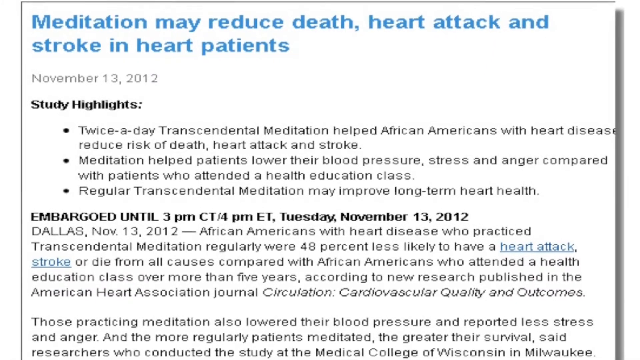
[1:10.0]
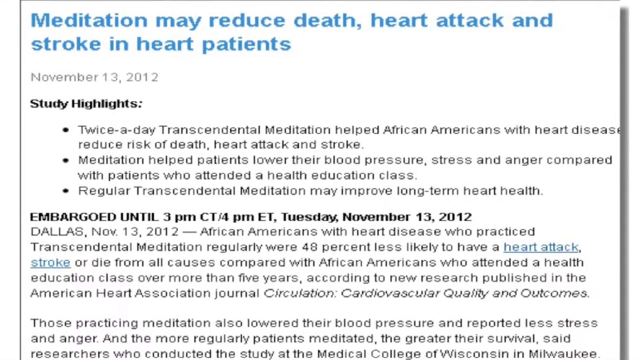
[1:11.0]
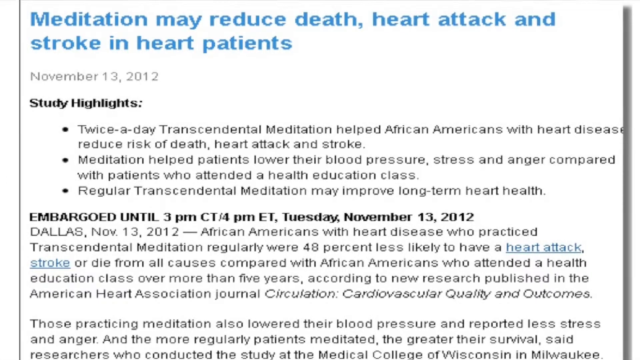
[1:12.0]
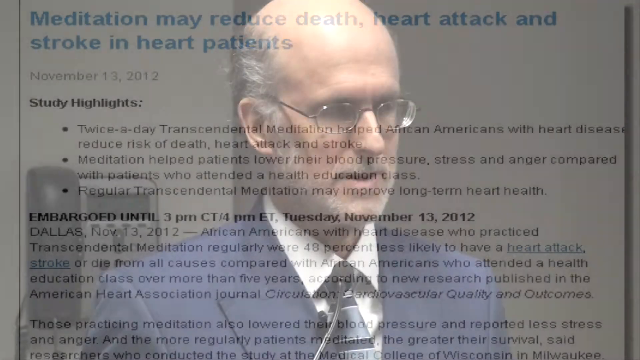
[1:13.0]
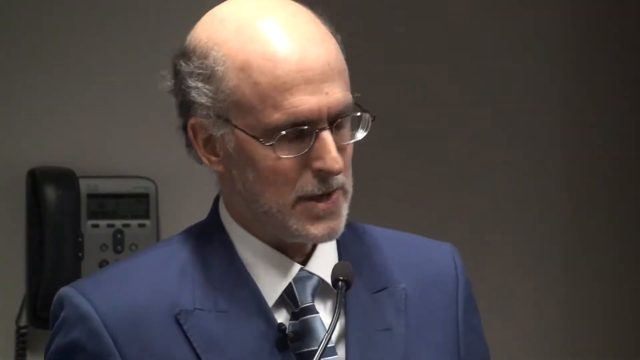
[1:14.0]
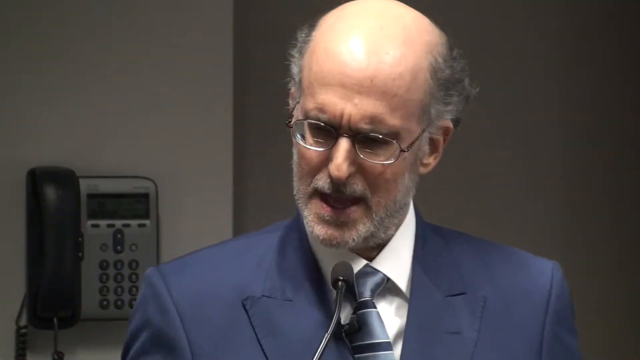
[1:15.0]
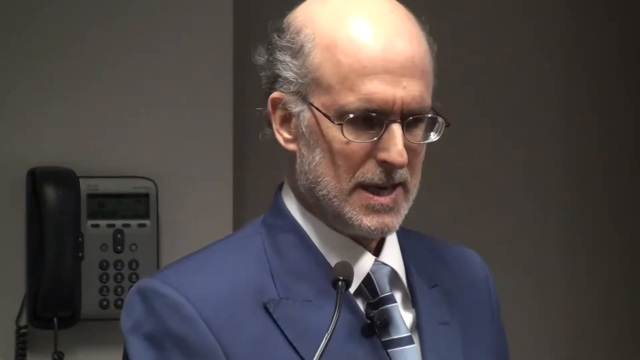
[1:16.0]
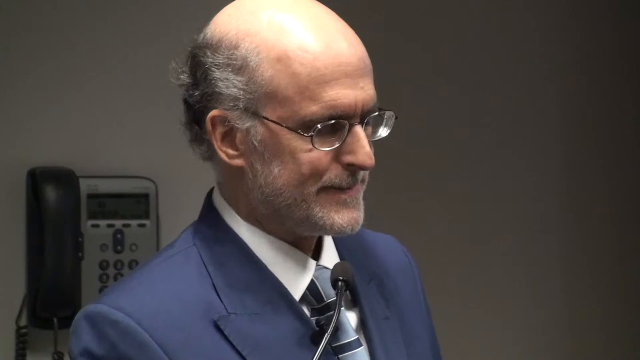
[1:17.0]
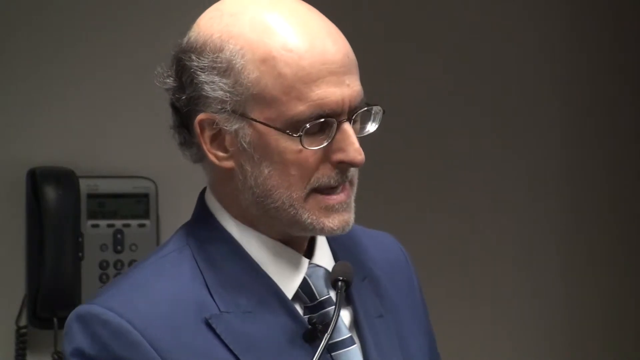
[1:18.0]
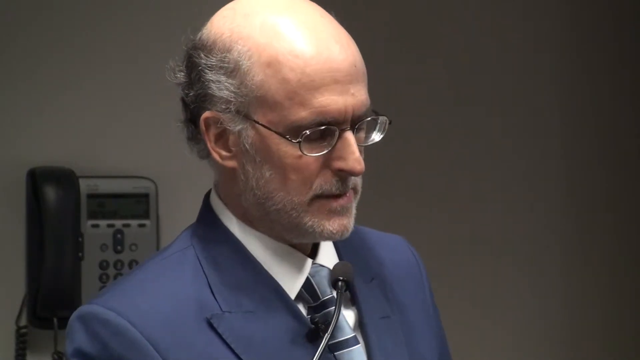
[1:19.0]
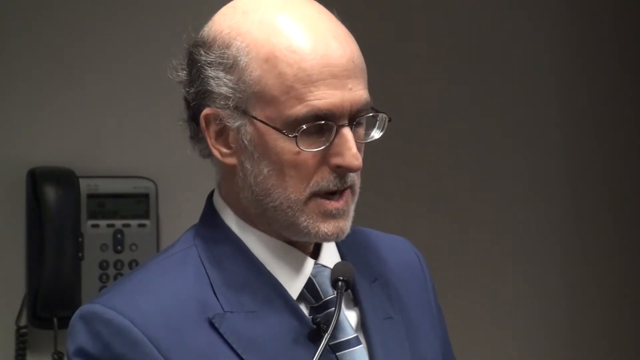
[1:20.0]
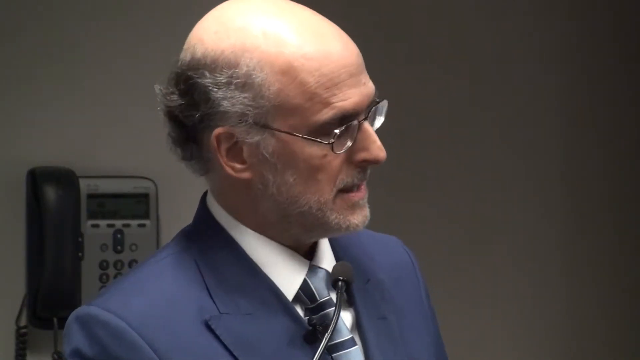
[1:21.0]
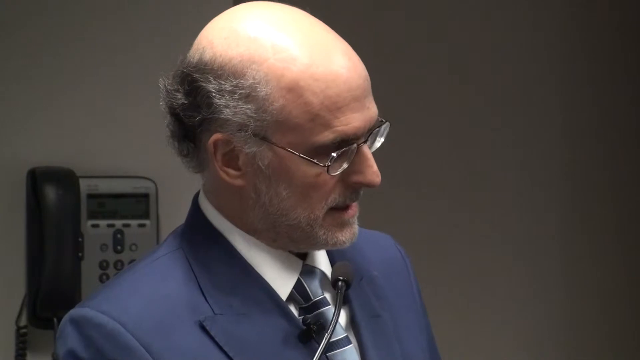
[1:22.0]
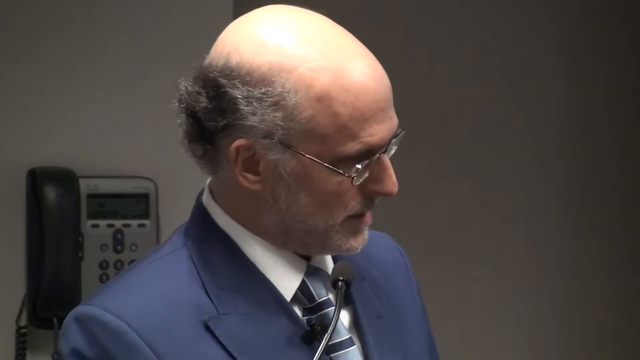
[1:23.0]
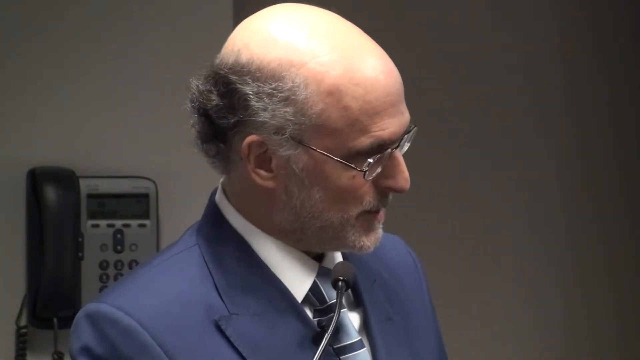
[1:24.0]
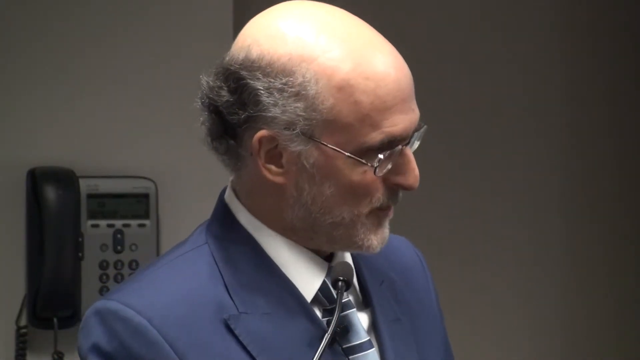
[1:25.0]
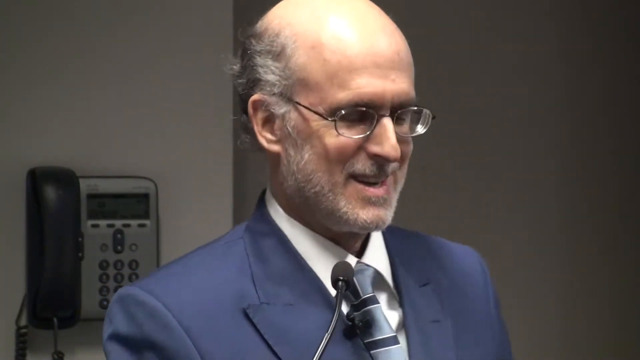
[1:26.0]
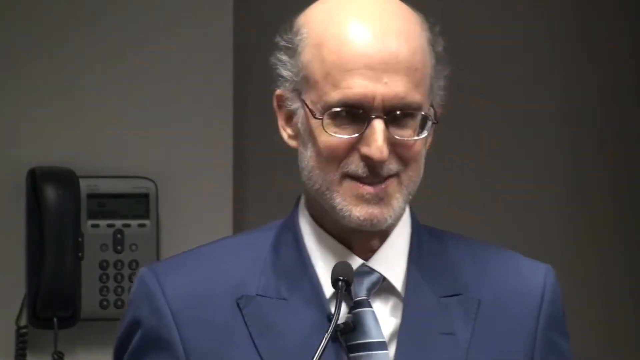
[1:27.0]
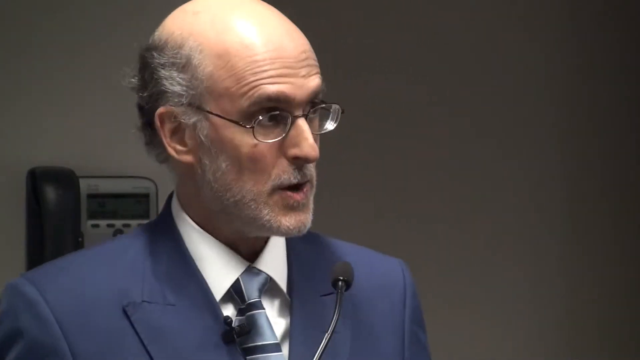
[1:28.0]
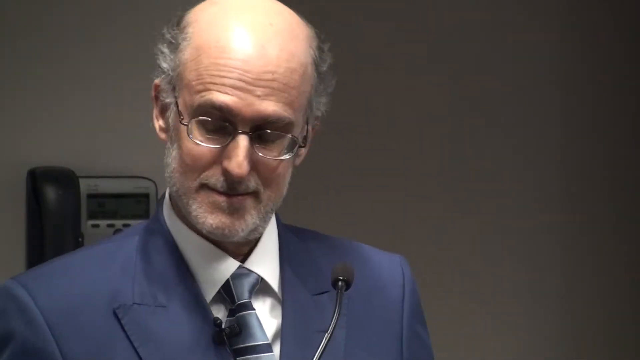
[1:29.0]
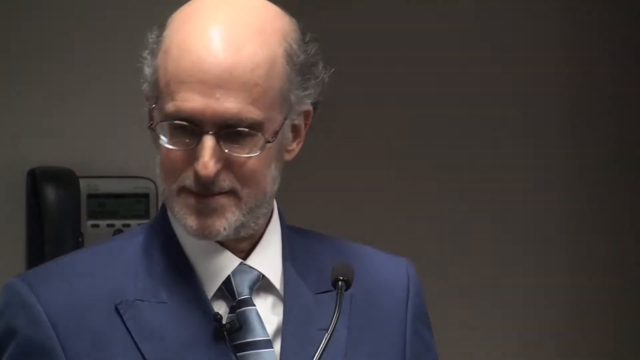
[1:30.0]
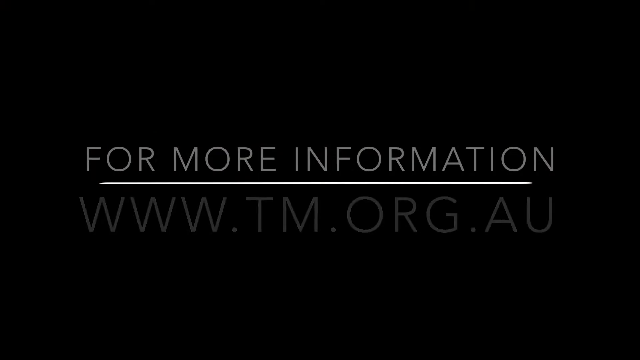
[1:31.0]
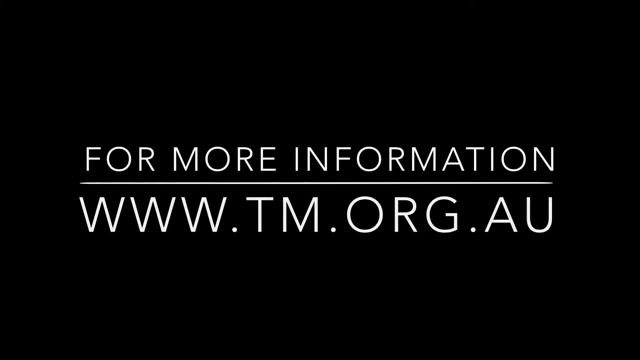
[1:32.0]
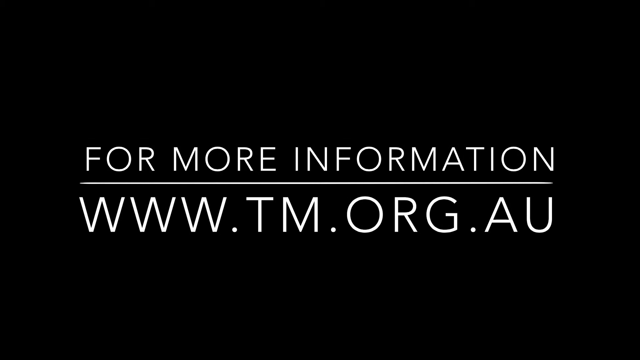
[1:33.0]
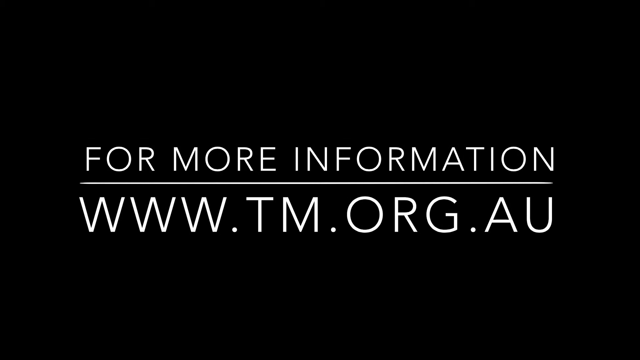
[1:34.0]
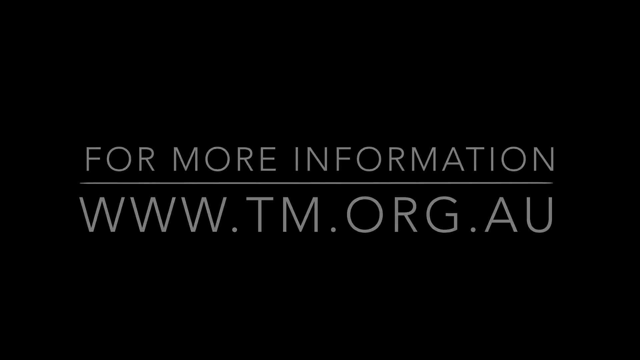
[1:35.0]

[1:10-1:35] A single still image of a web page shows an article posted on the page: essentially a white box with black borders and multiple lines of text. The text reads "Meditation May Reduce Death, Heart Attack, and Stroke in Heart Patients, November 13, 2012. Study highlights twice-a-day transcendental meditation helped African Americans with heart disease reduce risk of death, heart attack, and stroke. Meditation helped patients lower their blood pressure, stress, and anger compared with patients who attended a health education class. Regular transcendental meditation may help improve long-term heart health. Embargoed until 3 p.m. Central, 4 p.m. Eastern, Tuesday, November 13, 2012. Dallas, November 13, 2012, African Americans with heart disease who practiced transcendental meditation regularly were 48% less likely to have a heart attack, stroke, or die from causes compared with African Americans who attended a health education class over 5 years. According to new research published in the American Heart Association Journal, Circulation, Cardiovascular Quality, and Outcomes." The video continues slowly zooming in on the article before cutting to an interview with a man wearing a blue business suit in a white room. The man is facing towards the right of the camera. He is bald, wears glasses, and his tie is gray and blue. He speaks into a black stand mic in front of him. He looks further to his left and nods his head as he talks, smiles, then looks forward towards the camera briefly before looking back to the right of the camera. A new screen appears with a black background and white text that reads "for more information, www.tm.org.au."